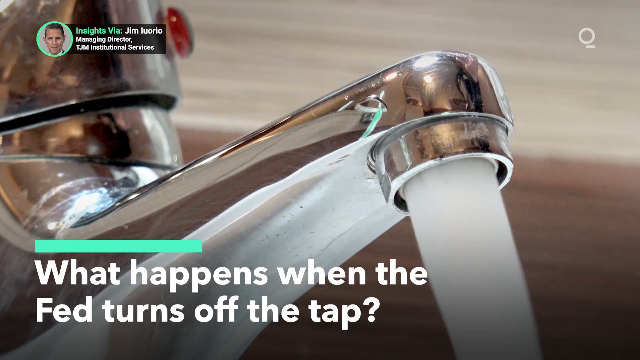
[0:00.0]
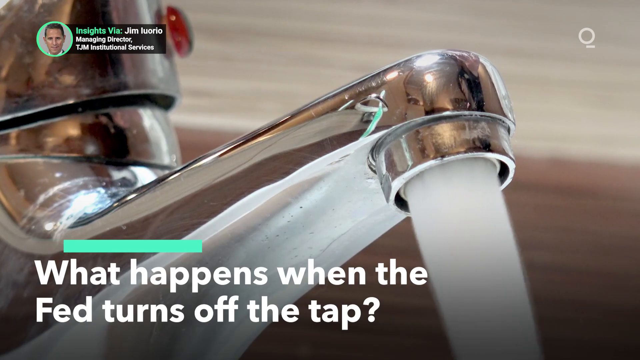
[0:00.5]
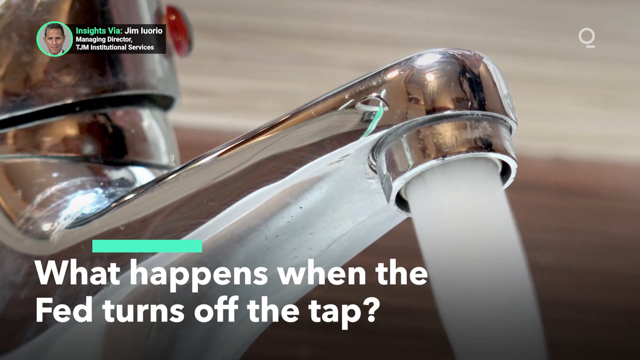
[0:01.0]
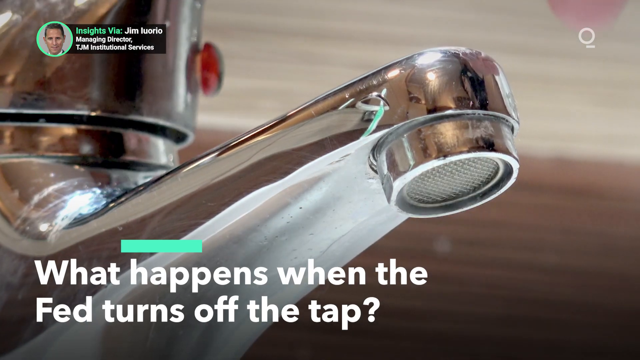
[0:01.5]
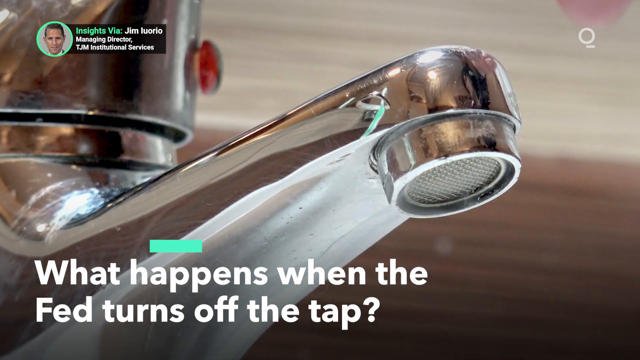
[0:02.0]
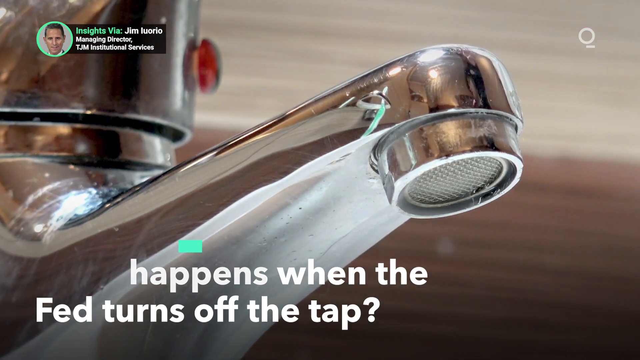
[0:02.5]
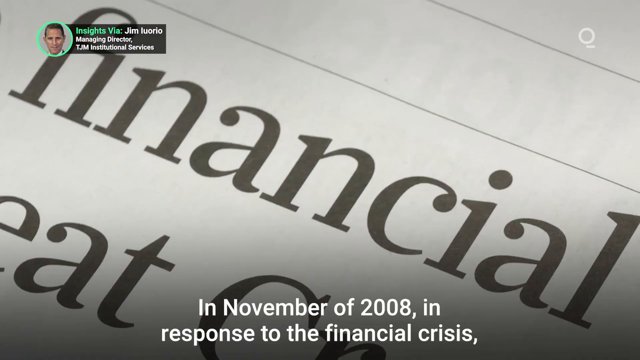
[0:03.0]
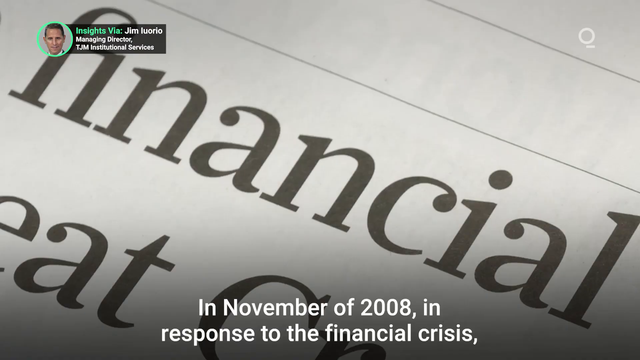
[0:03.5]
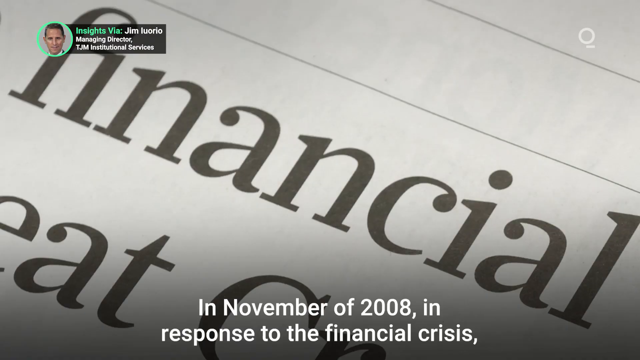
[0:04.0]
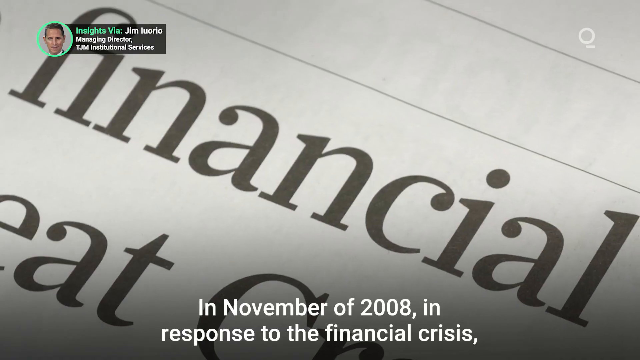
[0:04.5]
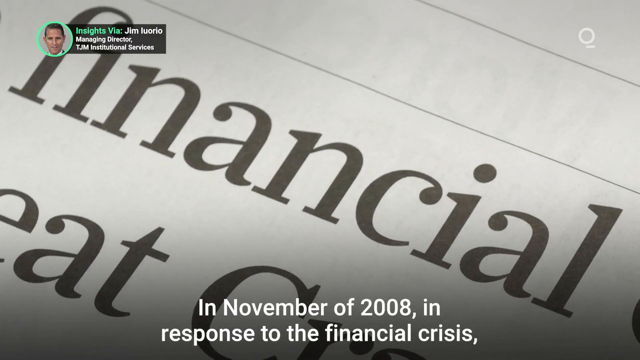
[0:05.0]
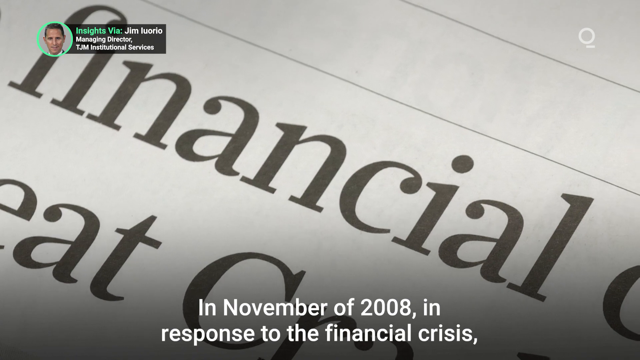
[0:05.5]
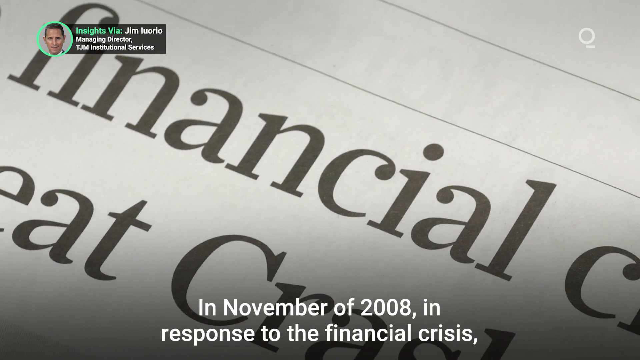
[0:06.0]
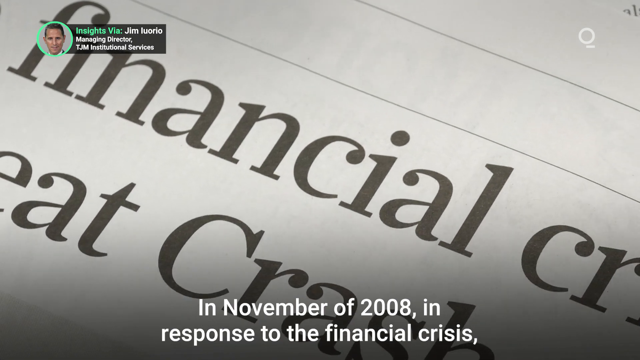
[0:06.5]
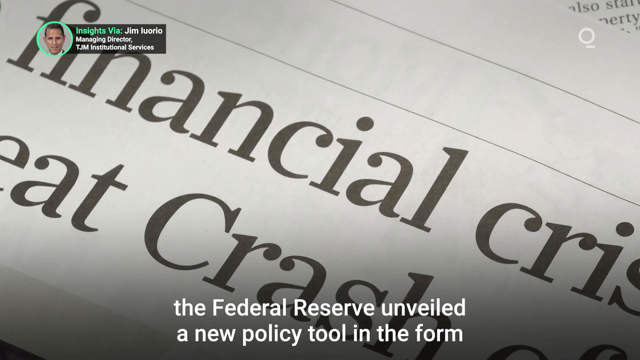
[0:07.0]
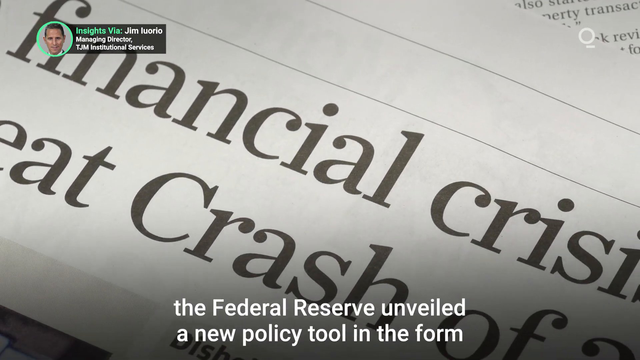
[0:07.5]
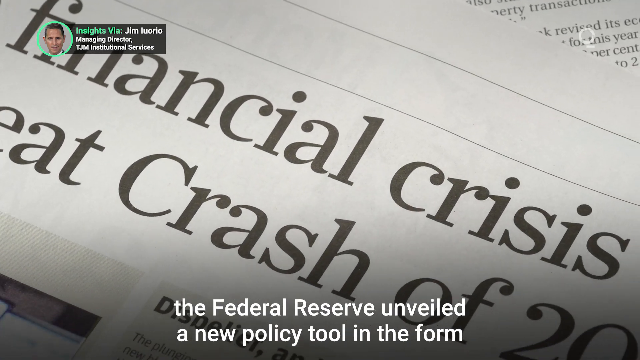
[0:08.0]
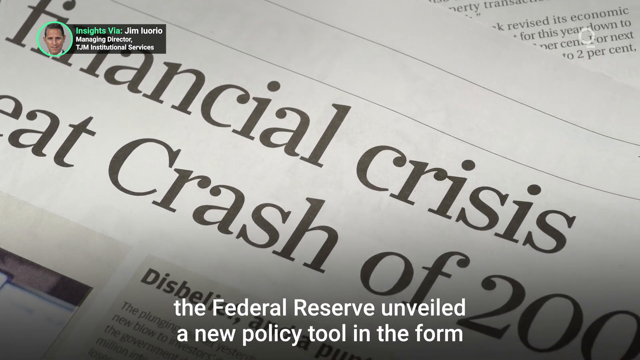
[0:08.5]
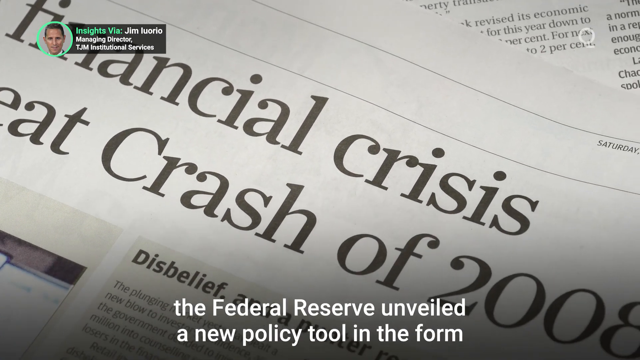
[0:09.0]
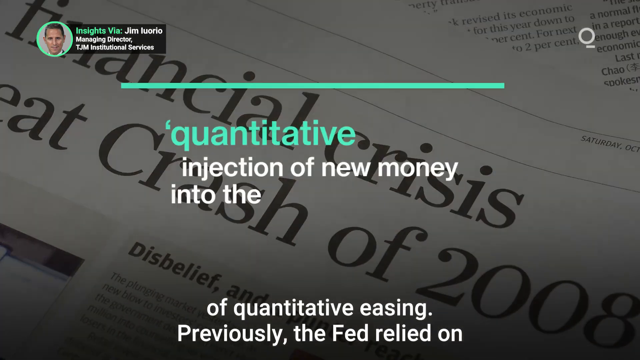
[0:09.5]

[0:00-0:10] What looks like some kind of business report opens with a logo in the top left of the screen: a circle with a man's face in it. Text reads "Insights via Jim Iuorio, Managing Director, TJM Institutional Services." A shiny silver water faucet is shown from below, with water flowing strongly from it, so the spot where the water comes out is visible. The caption says "what happens, when the fed turns off the tap?" The water gets shut off, and then a paper appears with the headlines "Financial Crisis" and "Crash of 2008."